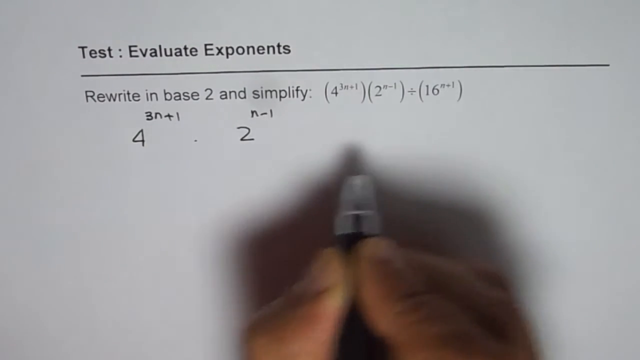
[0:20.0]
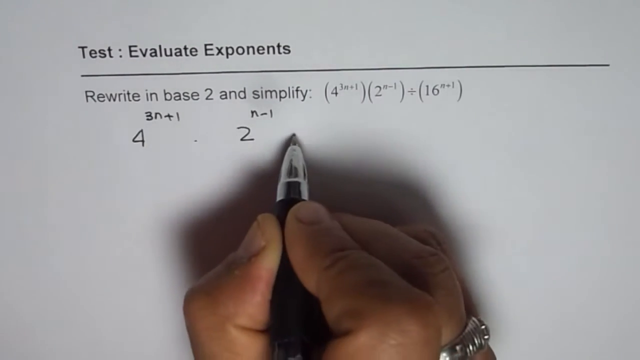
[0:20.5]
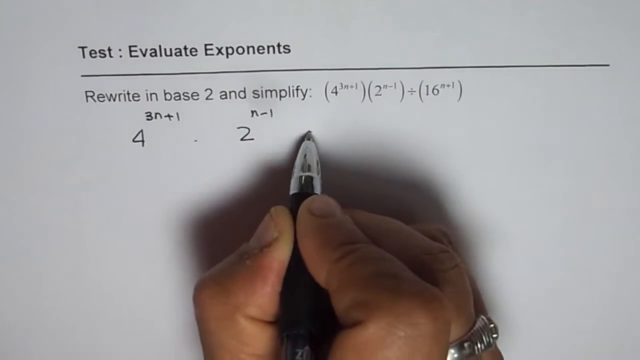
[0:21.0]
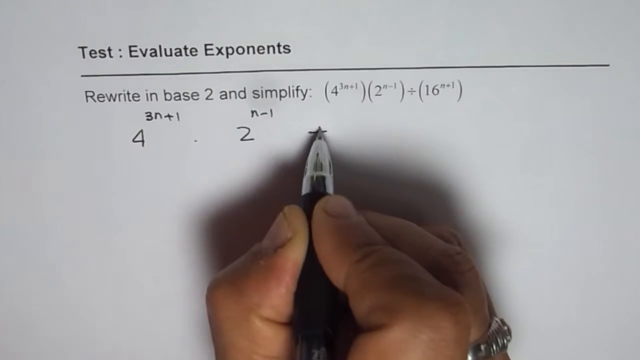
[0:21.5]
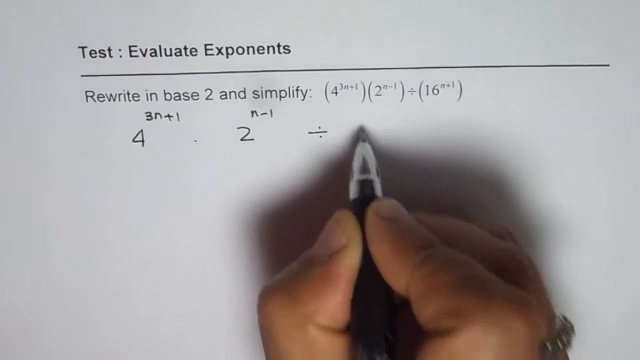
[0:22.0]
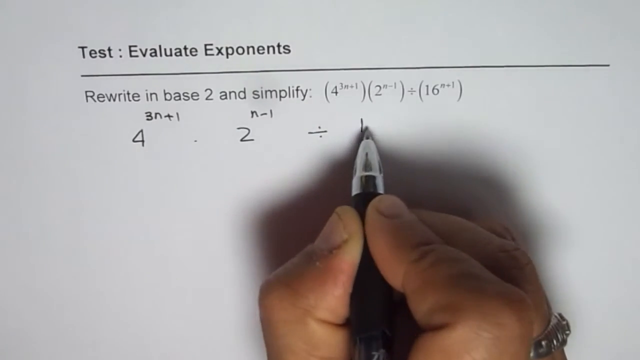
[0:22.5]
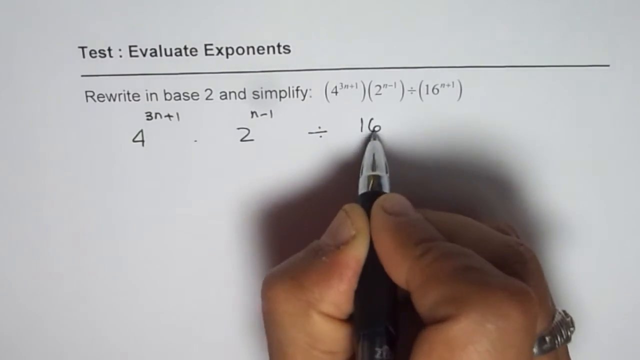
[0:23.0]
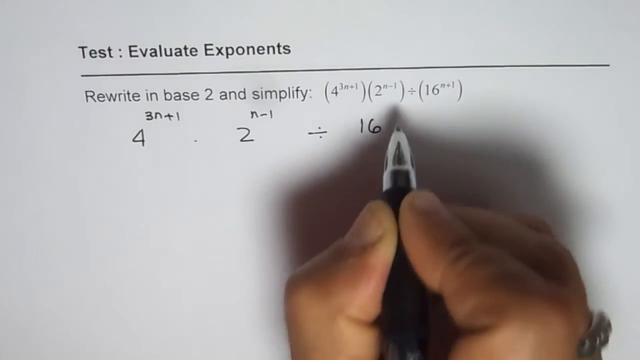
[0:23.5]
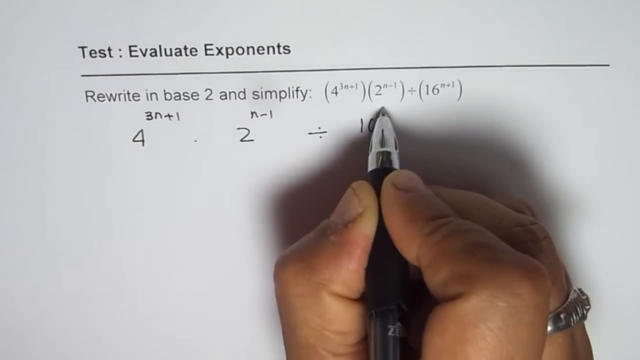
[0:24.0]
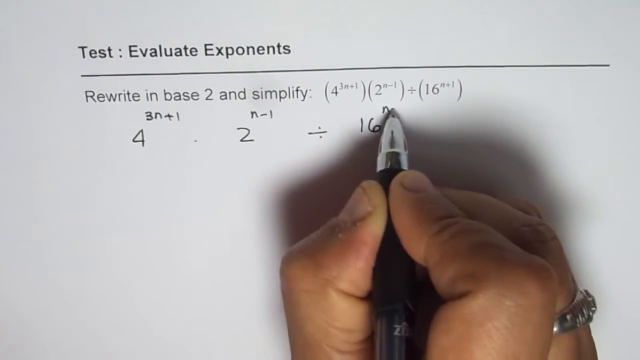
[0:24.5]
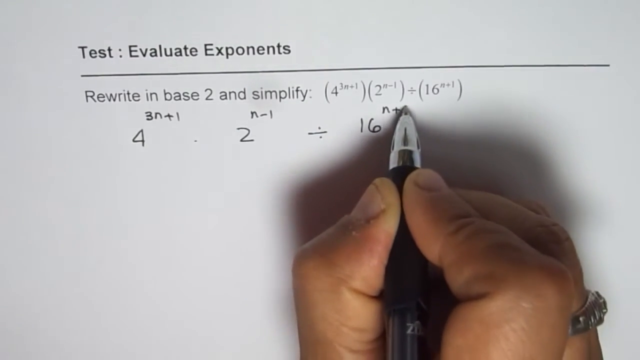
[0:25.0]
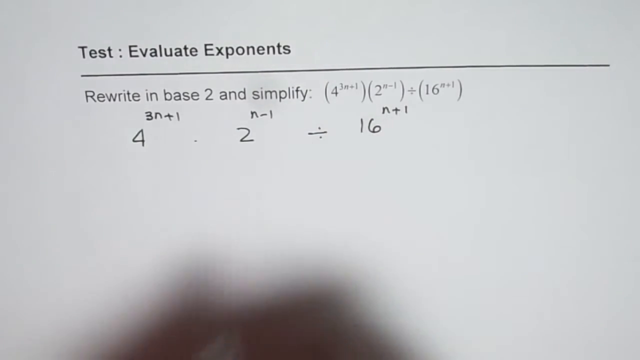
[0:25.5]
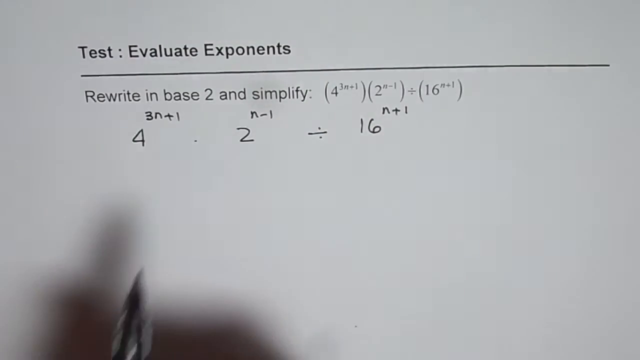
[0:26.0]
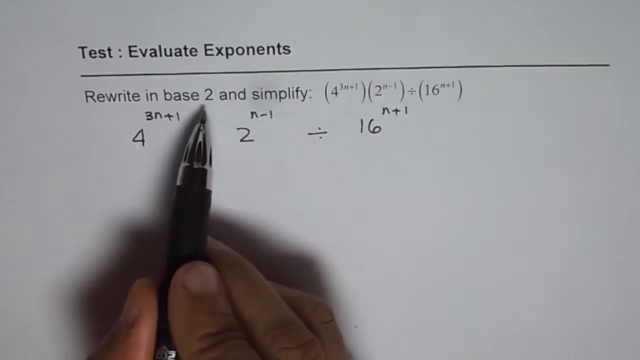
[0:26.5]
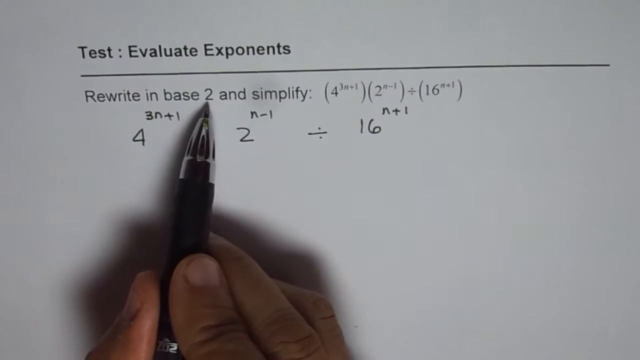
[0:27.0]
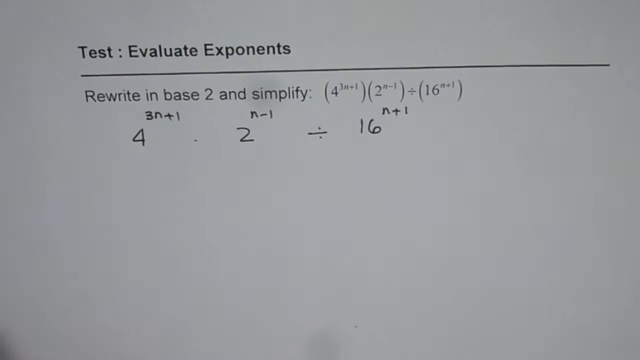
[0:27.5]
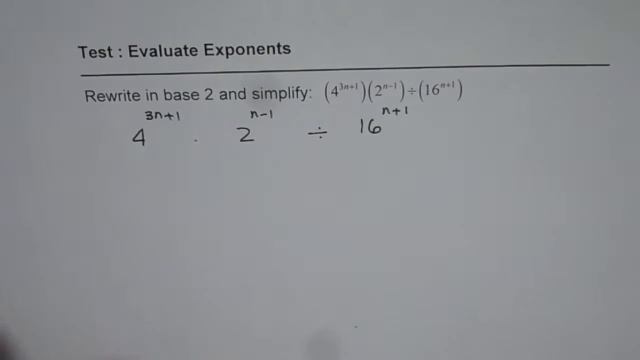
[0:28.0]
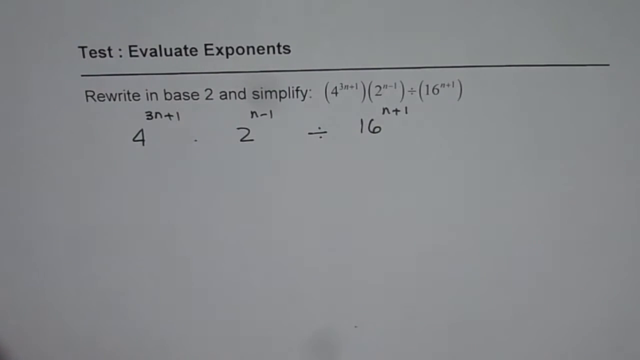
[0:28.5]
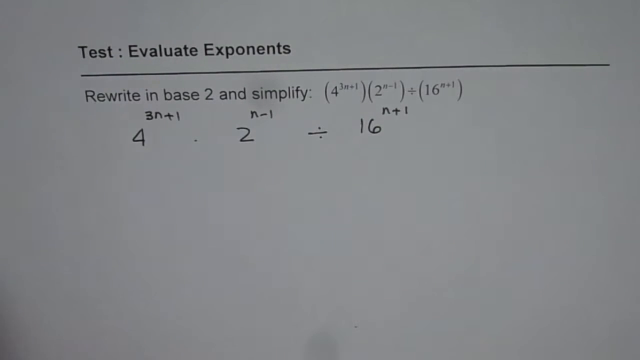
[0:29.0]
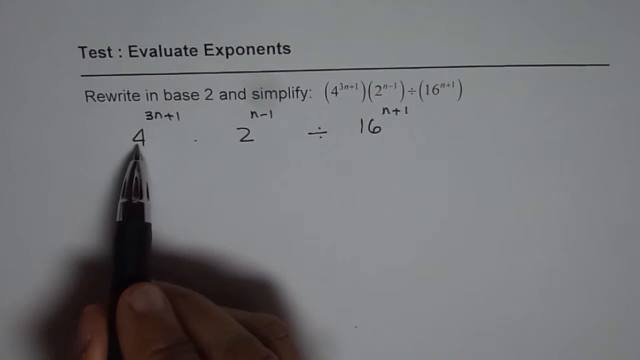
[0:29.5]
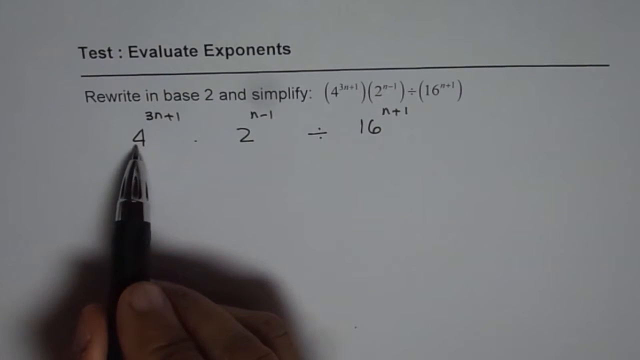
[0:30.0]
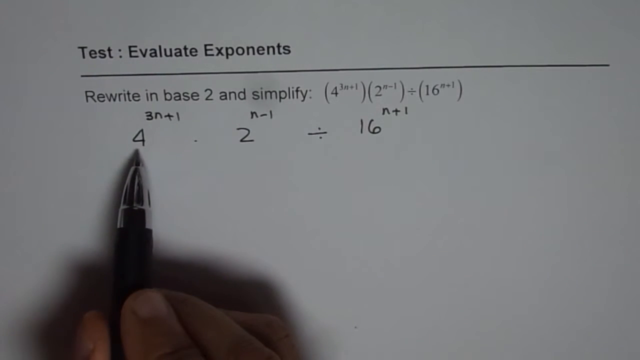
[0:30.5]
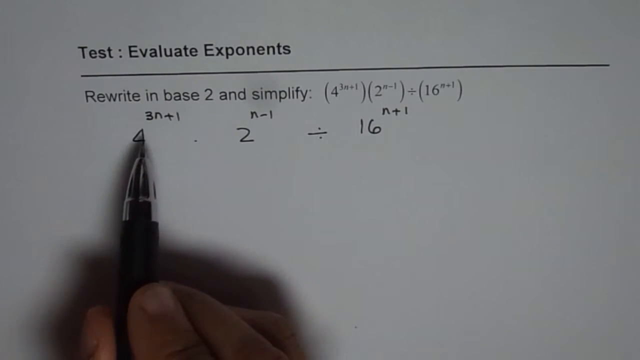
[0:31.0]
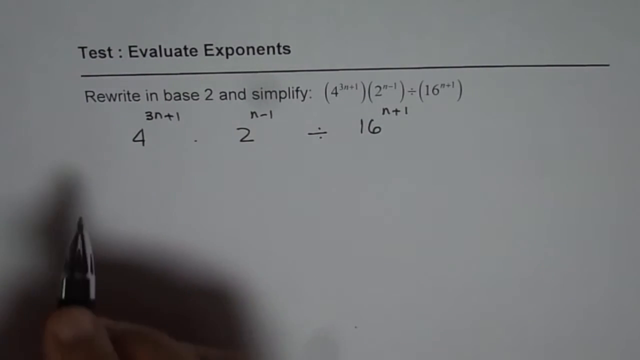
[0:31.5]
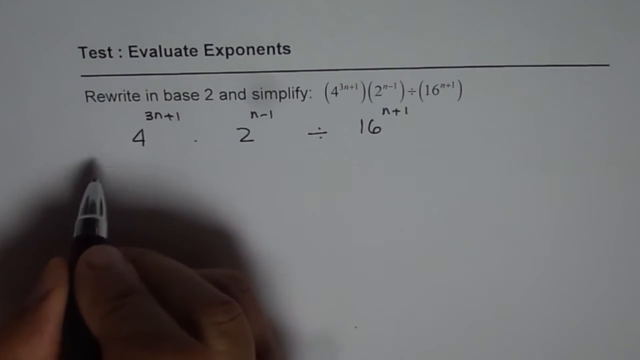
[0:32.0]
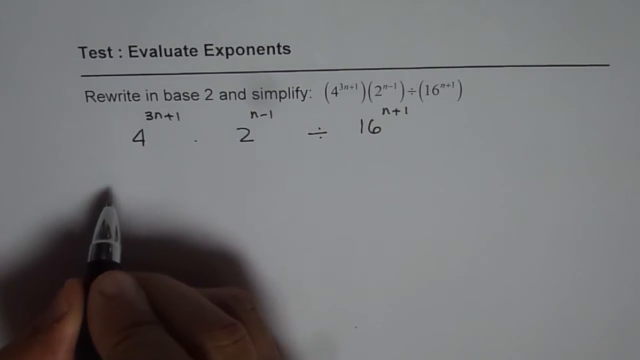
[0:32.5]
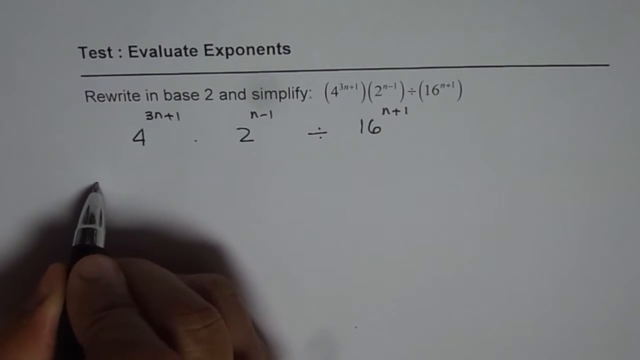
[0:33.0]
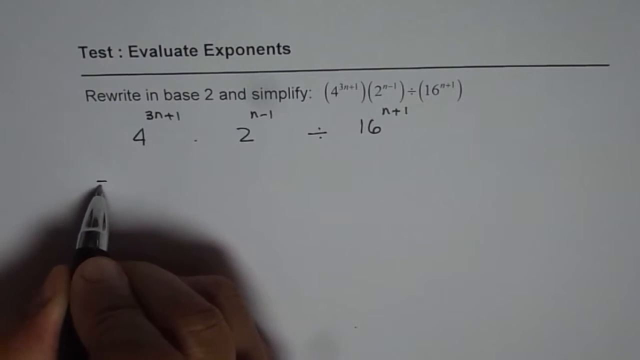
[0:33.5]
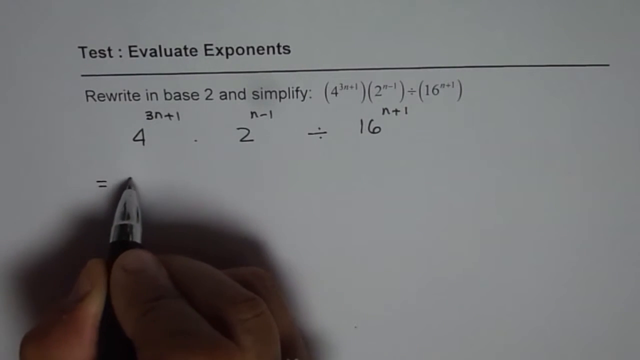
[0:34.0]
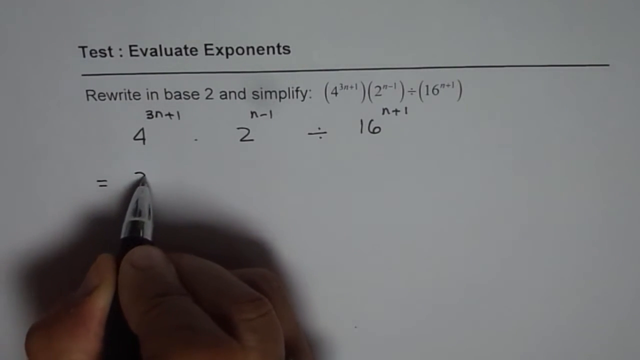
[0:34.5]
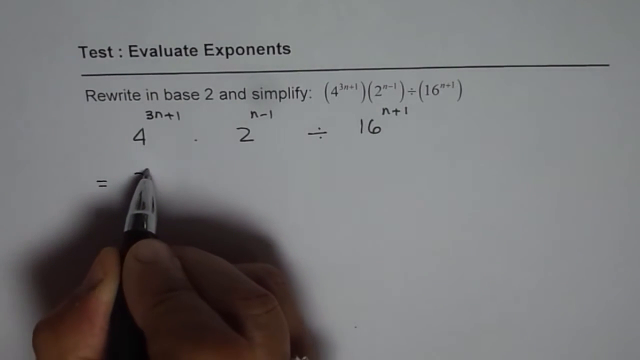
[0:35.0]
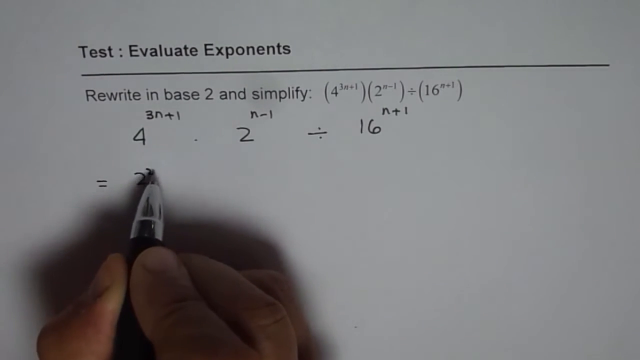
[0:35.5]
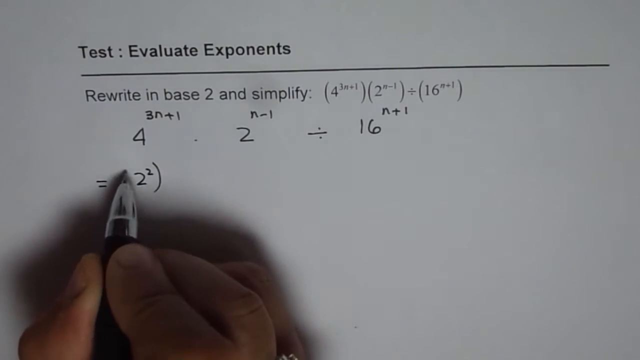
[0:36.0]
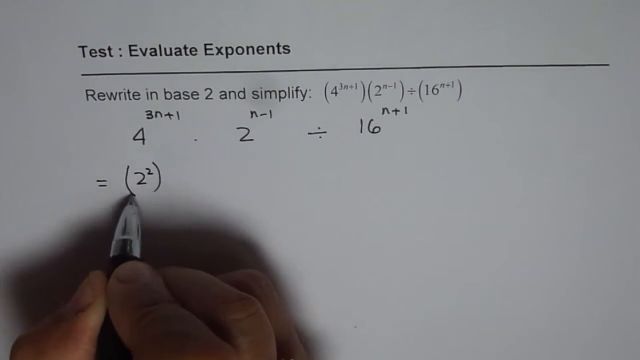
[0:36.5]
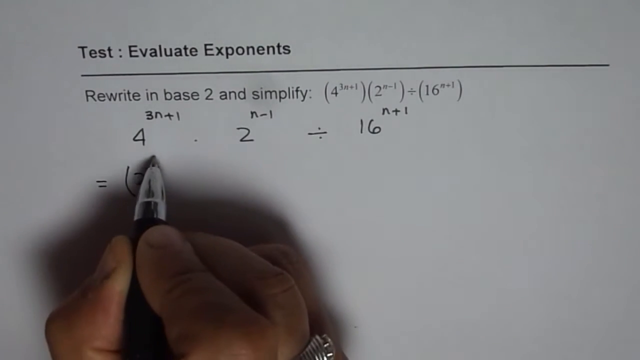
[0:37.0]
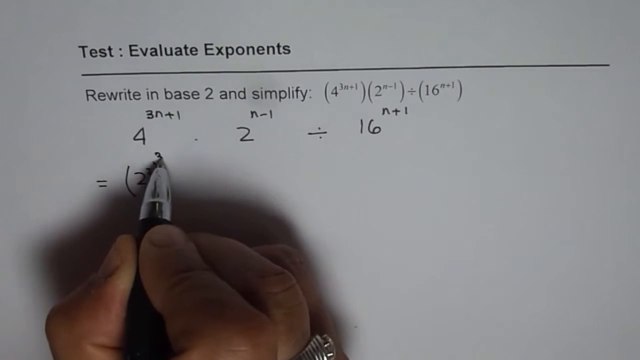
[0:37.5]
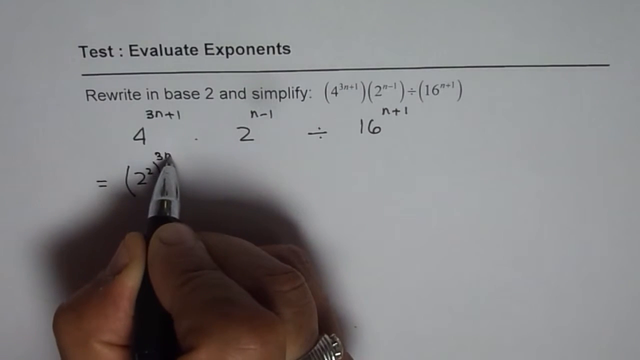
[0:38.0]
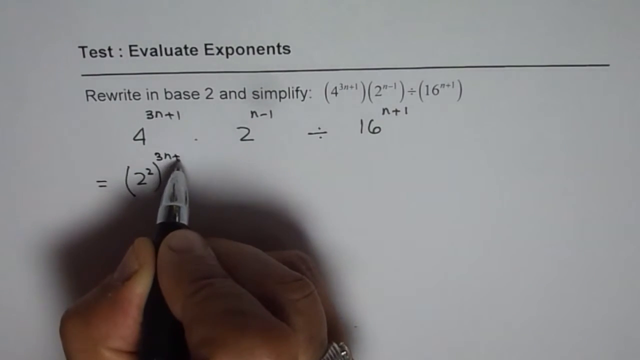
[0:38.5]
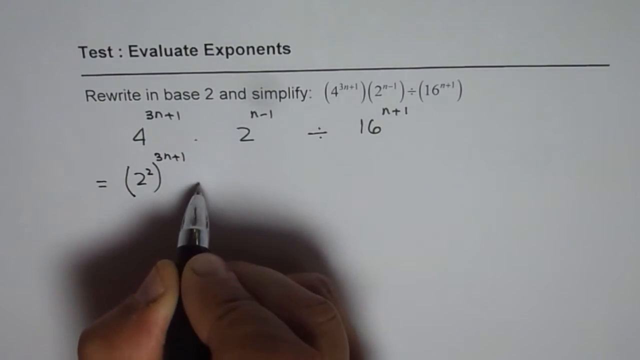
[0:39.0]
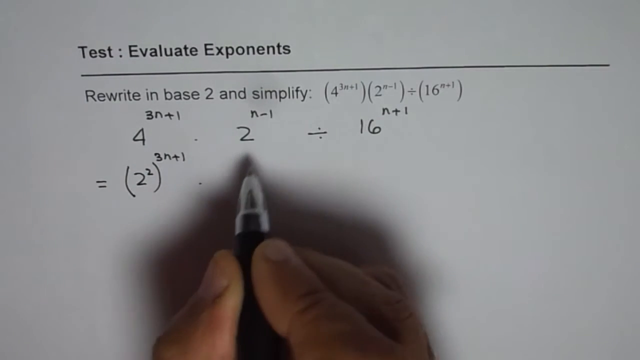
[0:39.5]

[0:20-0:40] A white piece of paper has bold black text at the top reading "test: evaluate exponents," with a black line underneath. Below that, in non-bold black text, it says "rewrite in base two and simplify:" followed by an equation. On the left side, the person has written down the first two parts of the equation. At the bottom of the screen, the person's right hand holds a black pen with a silver tip. They write a division sign and then the number 16, and above the 16, to the right, they write n + 1. They point at the number 2 written at the top of the page, then point at the number 4 with the pen. Underneath, they write "= 2," put a 2 on top of that 2, and put parentheses around it. Above the parentheses, to the right, they write 3n + 1. They then point at the number 2 they wrote earlier.